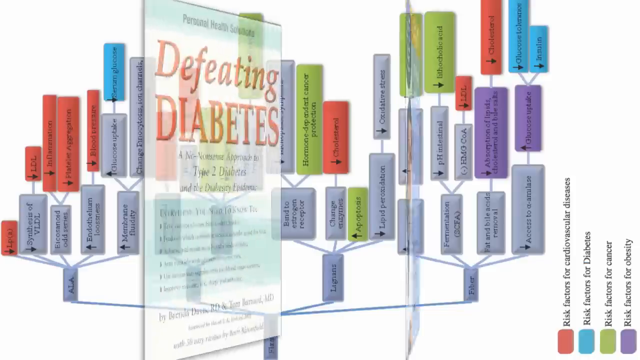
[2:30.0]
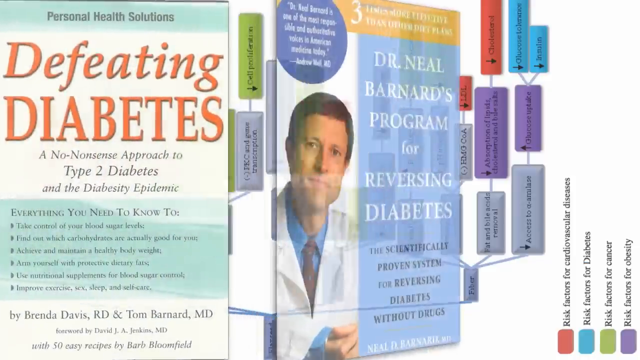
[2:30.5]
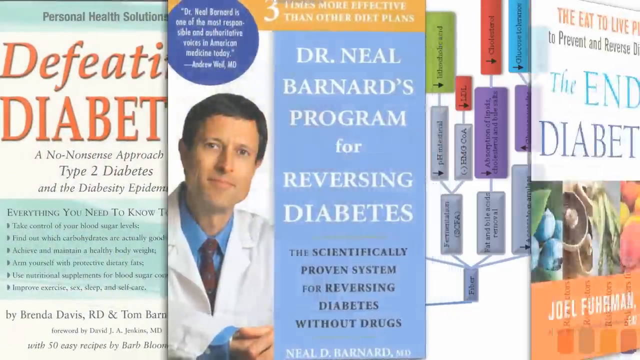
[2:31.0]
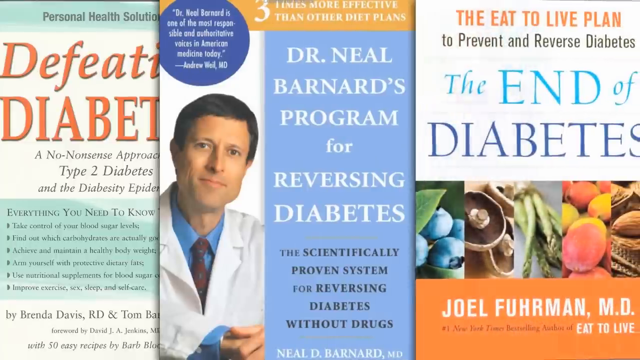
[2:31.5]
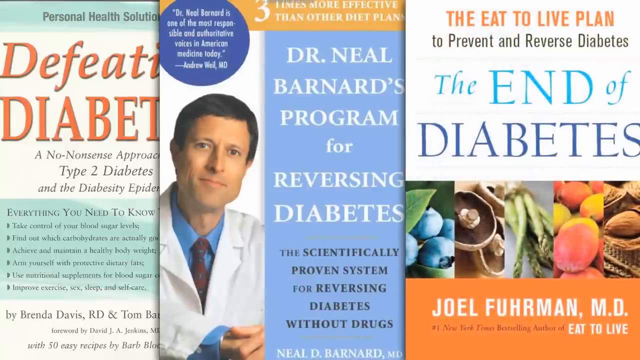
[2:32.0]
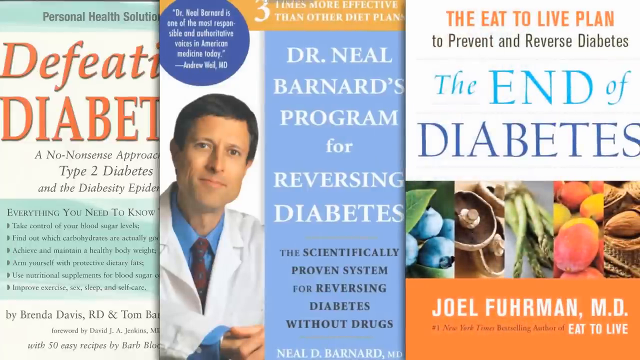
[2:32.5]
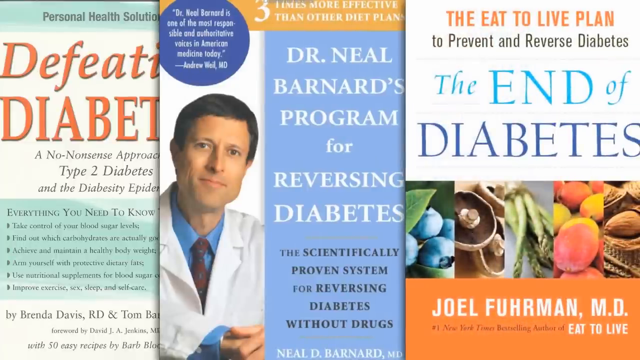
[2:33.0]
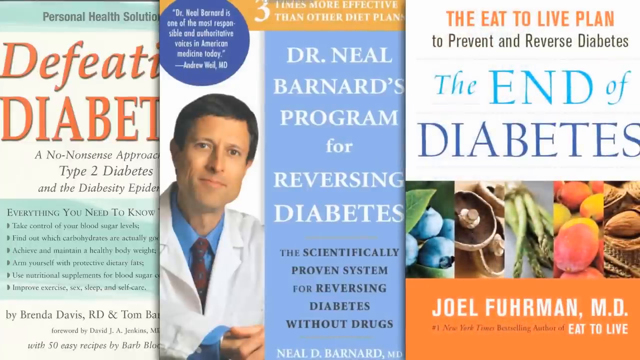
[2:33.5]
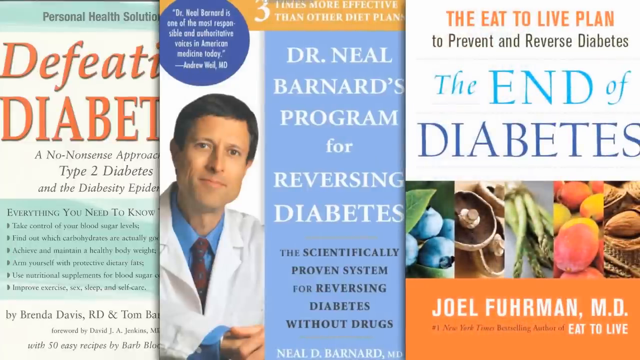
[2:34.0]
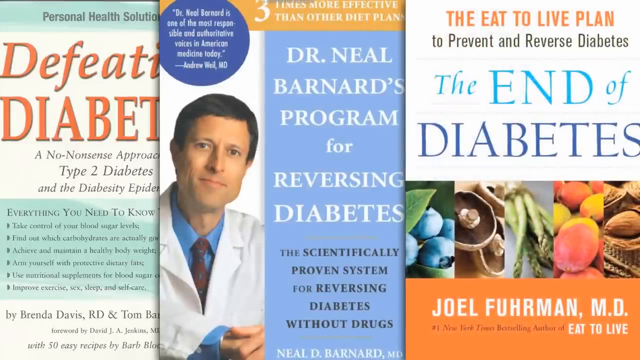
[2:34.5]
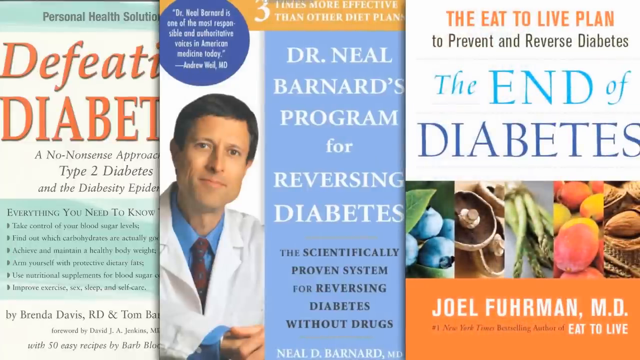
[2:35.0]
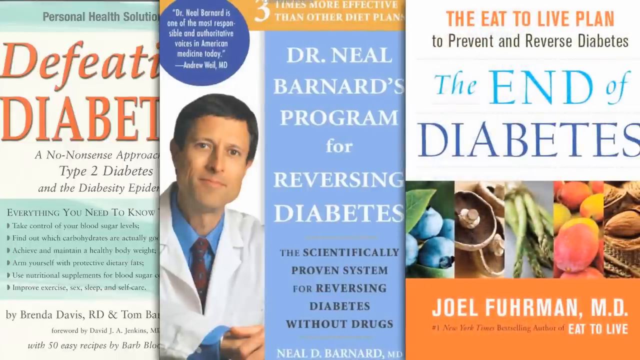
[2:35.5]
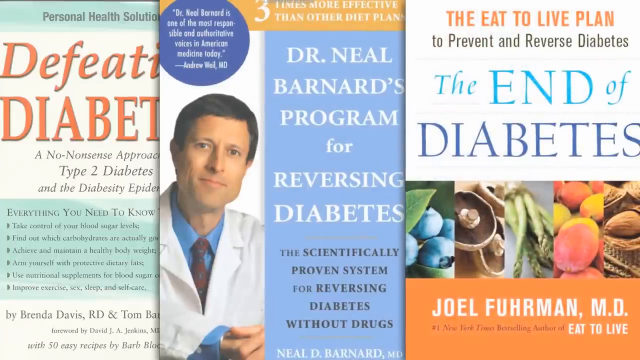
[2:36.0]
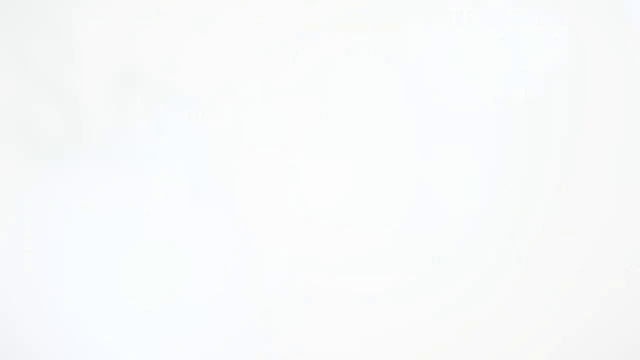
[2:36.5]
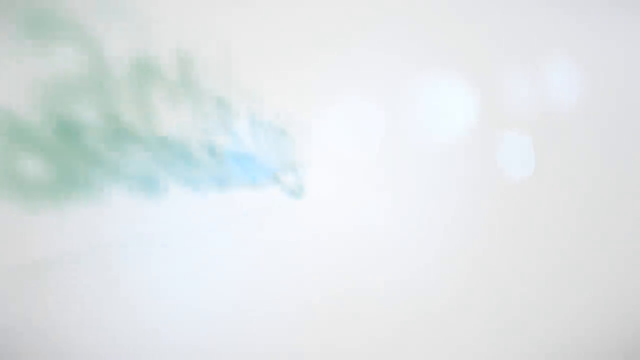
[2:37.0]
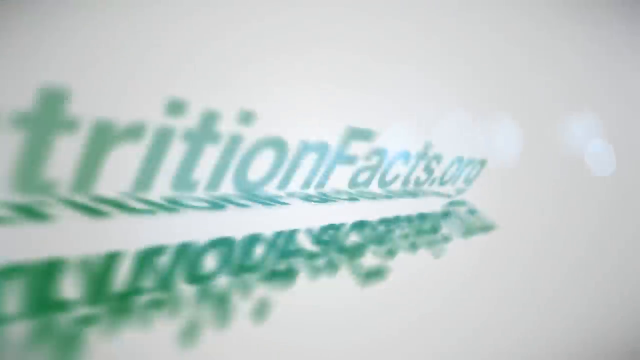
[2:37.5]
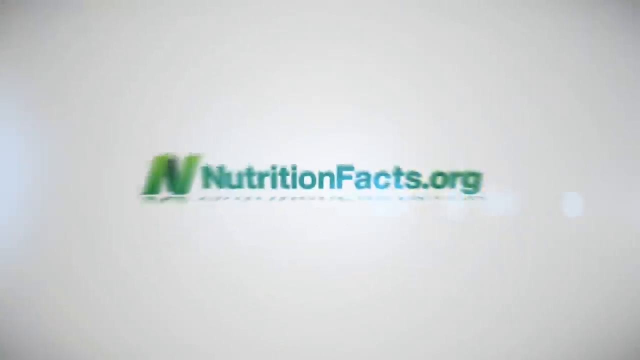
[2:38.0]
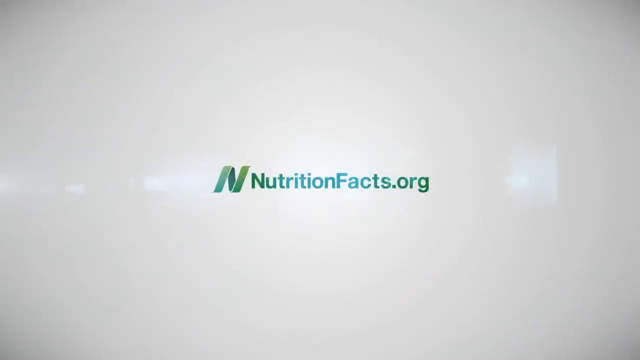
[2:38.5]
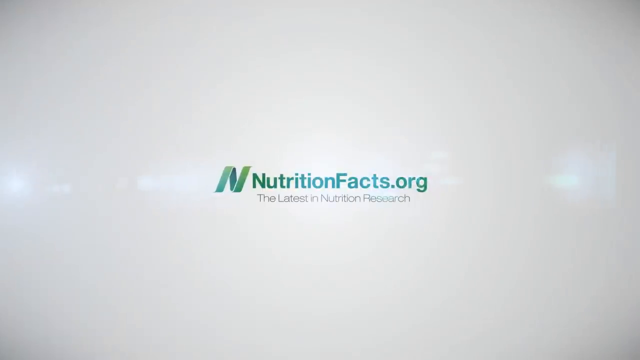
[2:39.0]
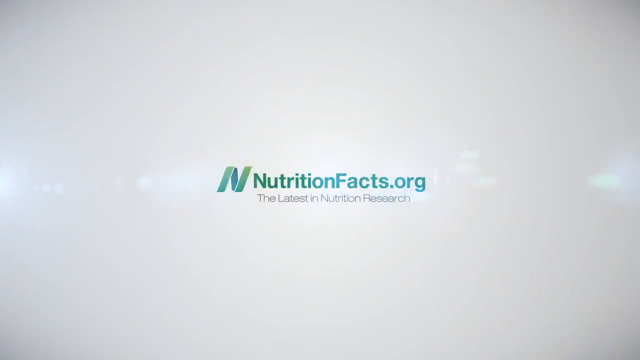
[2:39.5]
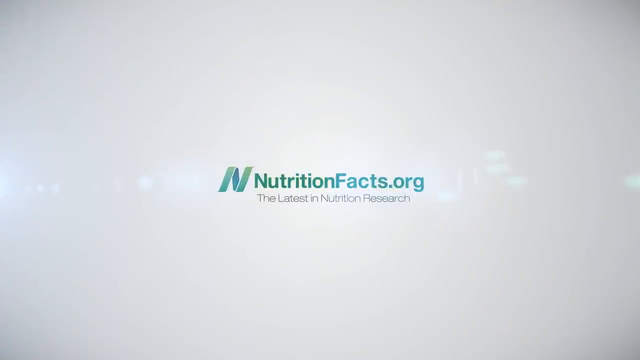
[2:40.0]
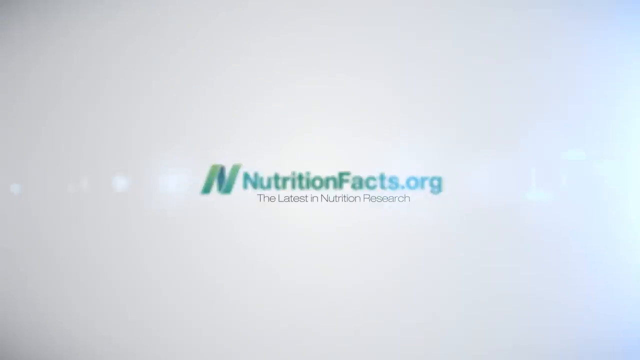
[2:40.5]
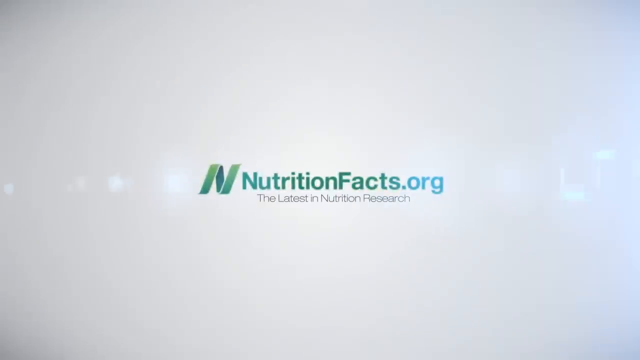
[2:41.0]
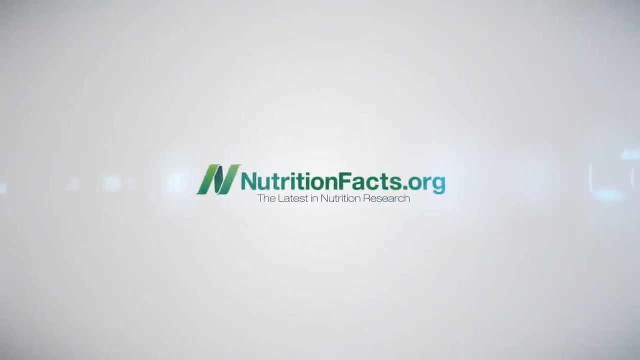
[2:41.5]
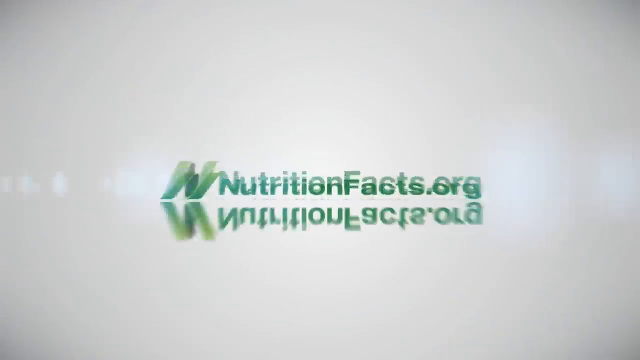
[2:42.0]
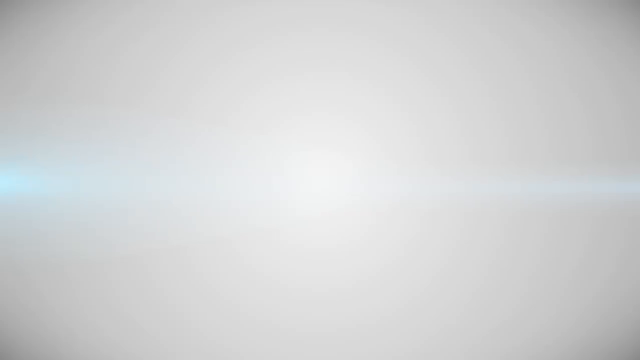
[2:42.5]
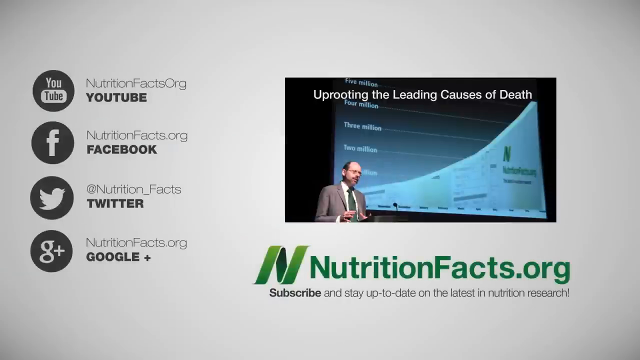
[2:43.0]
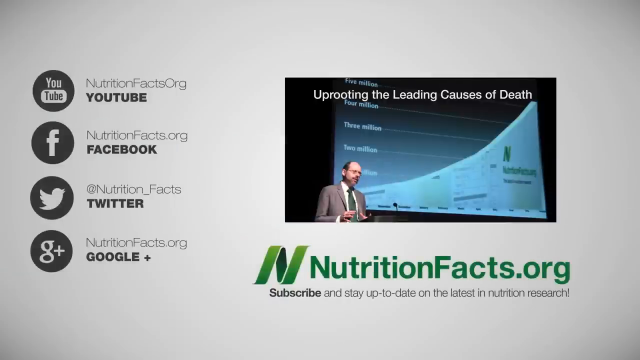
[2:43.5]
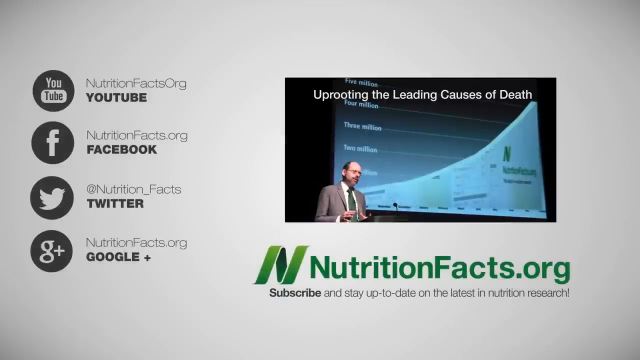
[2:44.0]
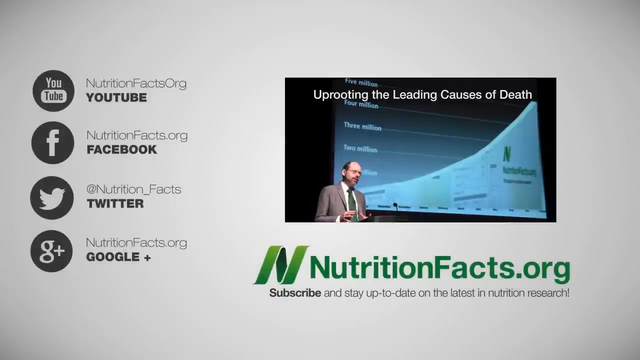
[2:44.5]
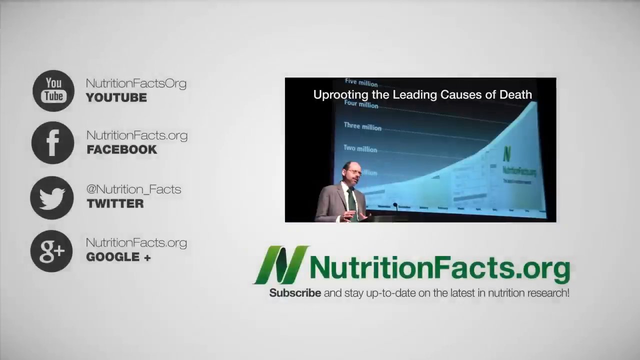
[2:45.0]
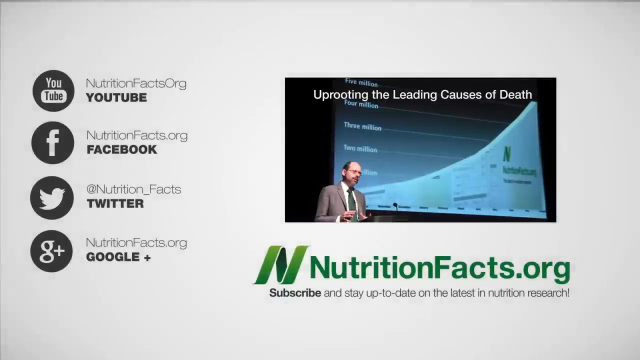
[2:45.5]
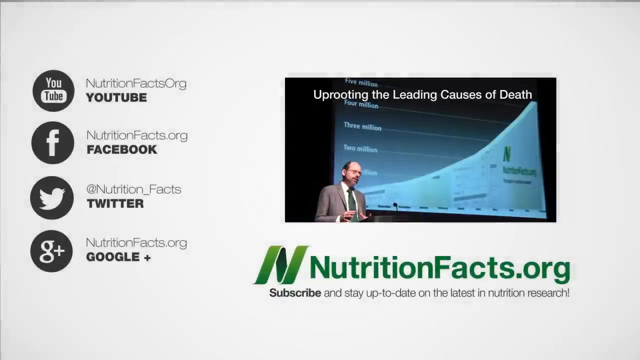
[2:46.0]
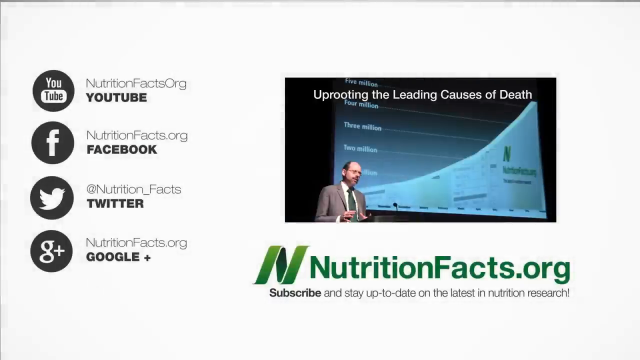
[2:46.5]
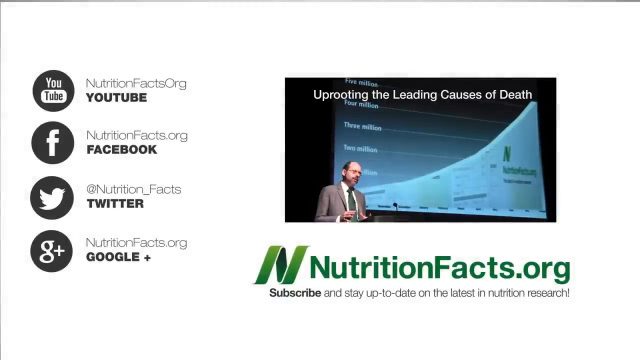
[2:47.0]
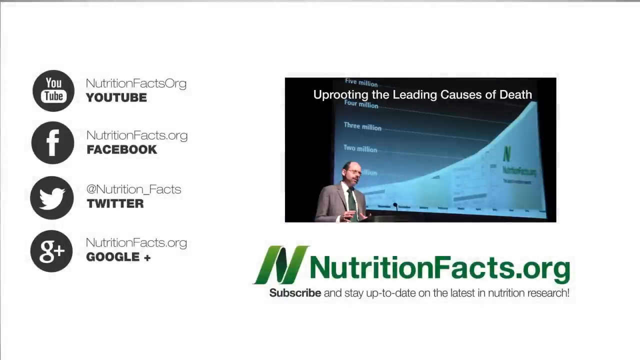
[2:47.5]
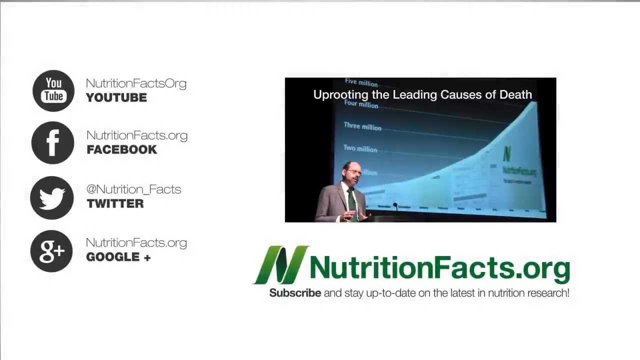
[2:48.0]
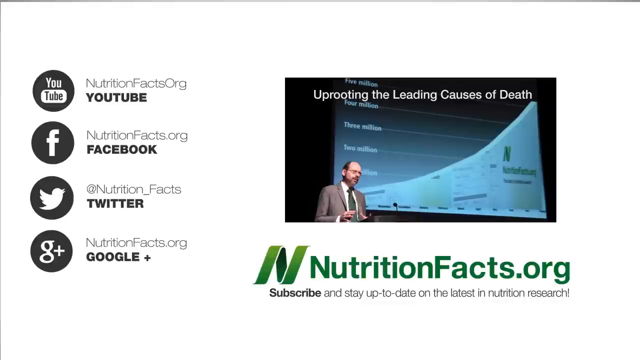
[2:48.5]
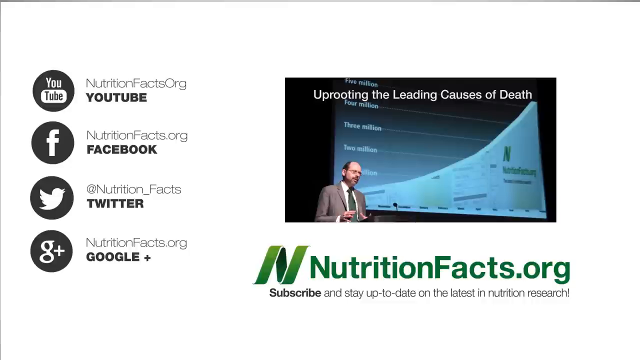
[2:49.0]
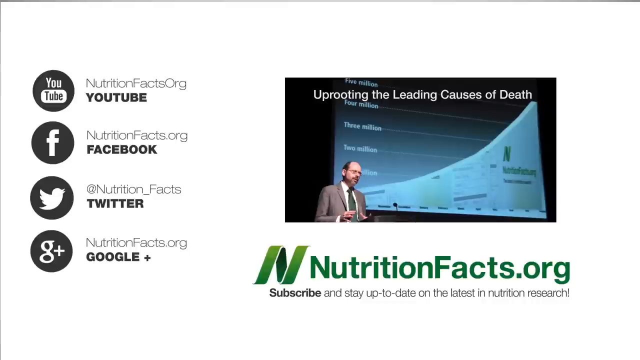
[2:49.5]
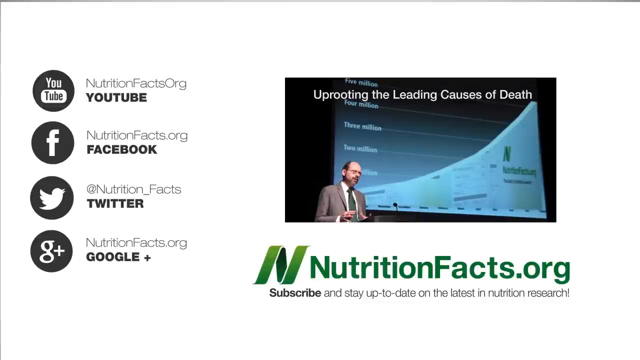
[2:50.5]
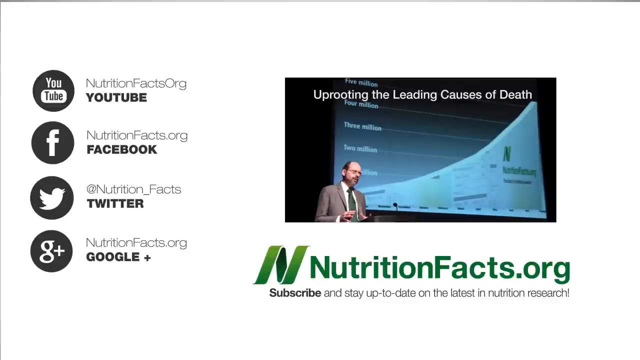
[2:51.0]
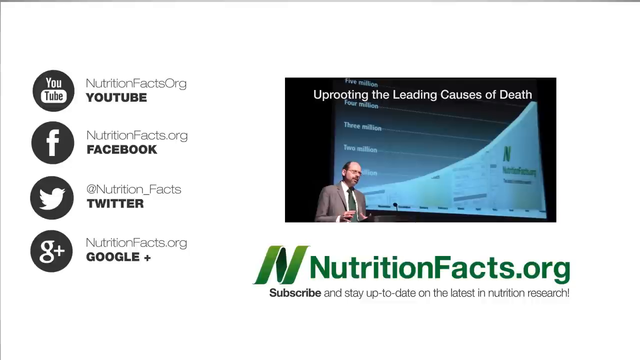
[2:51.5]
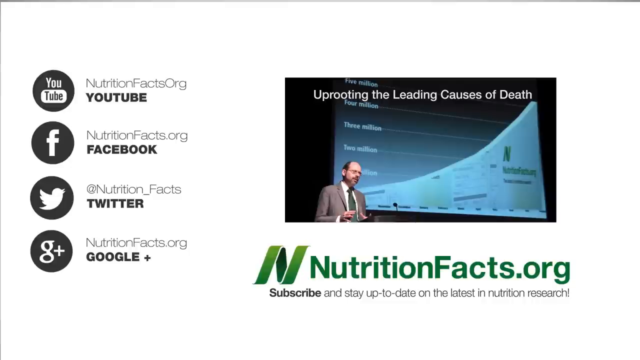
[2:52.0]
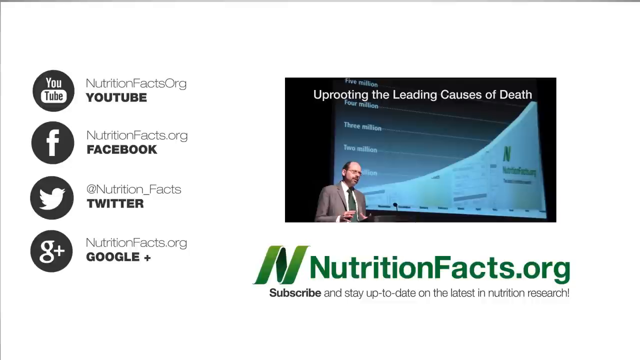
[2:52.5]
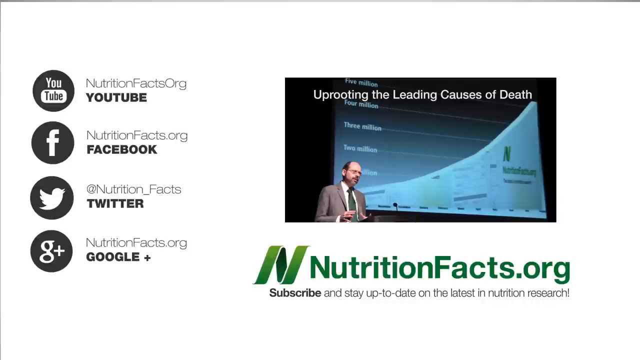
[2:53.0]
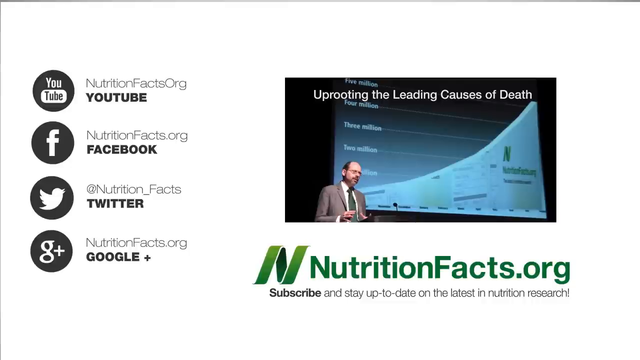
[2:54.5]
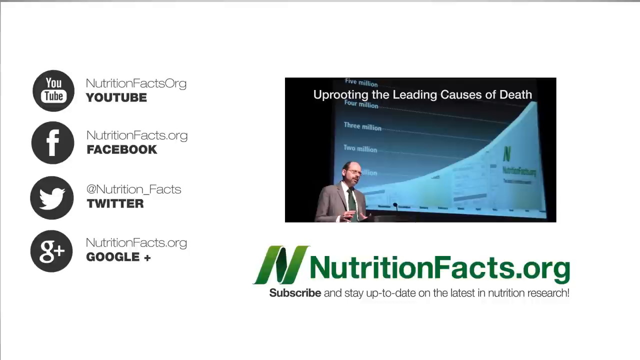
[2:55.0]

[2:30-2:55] The diagram remains on screen but is now partially transparent. Multiple books come into view from the left side. The book on the left is light bluish green, with a light bluish-green strip at the very top reading "Personal Health Solution". Below is a white patch with "Defeating Diabetes" in large orange font, followed by small black italic letters reading "A No Nonsense Approach Type 2 Diabetes and the Diabesity Epidemic". Further down, in the same light blue-green colour, it says "everything you need to know", and then the font becomes very small in bullet points. To the right is another book with a man, a doctor in a white coat, on the front, and to the right of him it reads "Dr. Neil Barnard's Program for Reversing Diabetes, the scientifically proven system for reversing diabetes without drugs". To the right of that is "the Eat to Live Plan", written in orange on white, with "to prevent and reverse diabetes" in black below. Then "The End Of" appears in large blue letters, with "the" and "of" in italics and "end" in capitals, not italicized, and below it "Diabetes" in dark blue.